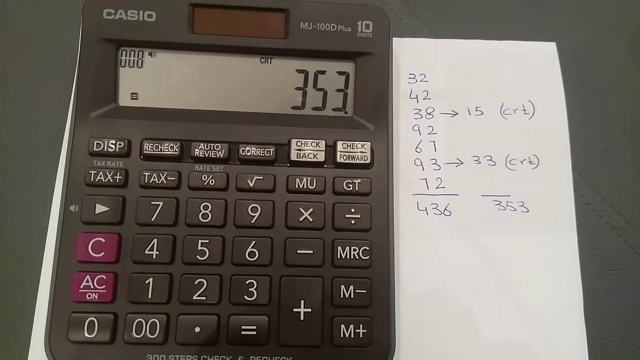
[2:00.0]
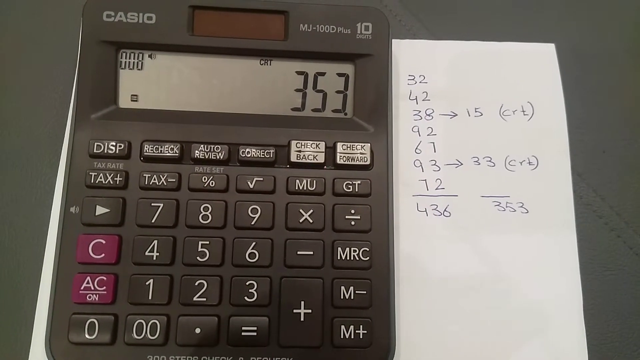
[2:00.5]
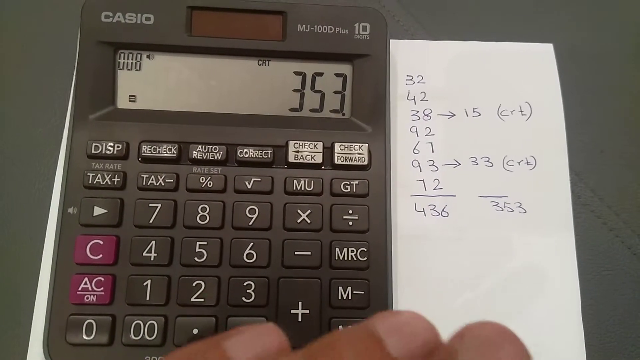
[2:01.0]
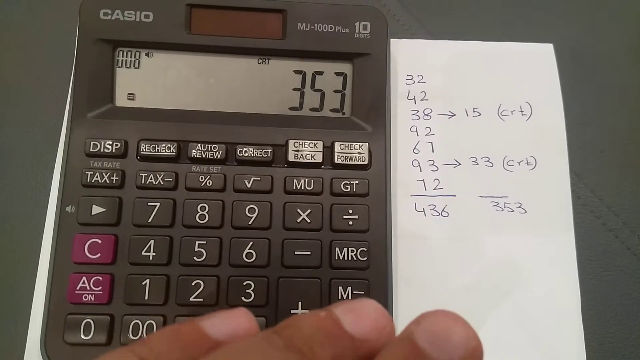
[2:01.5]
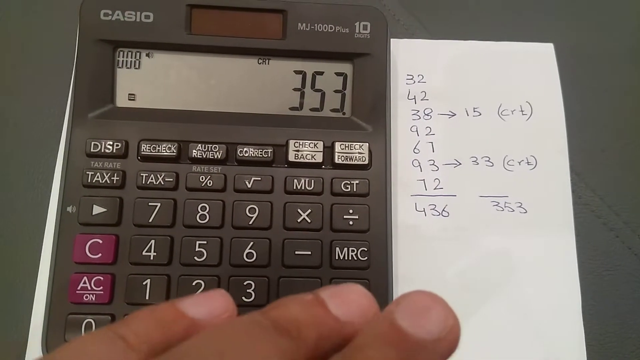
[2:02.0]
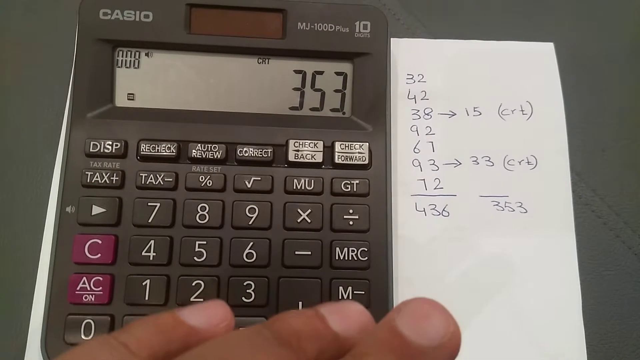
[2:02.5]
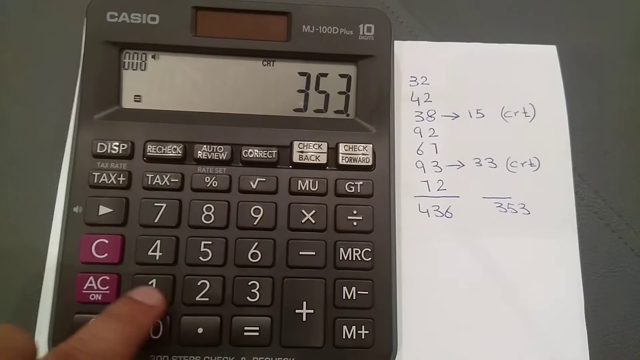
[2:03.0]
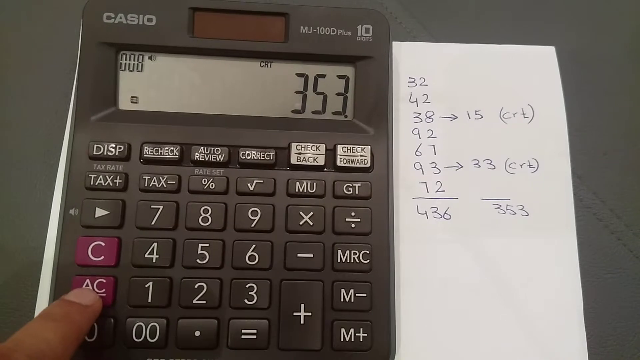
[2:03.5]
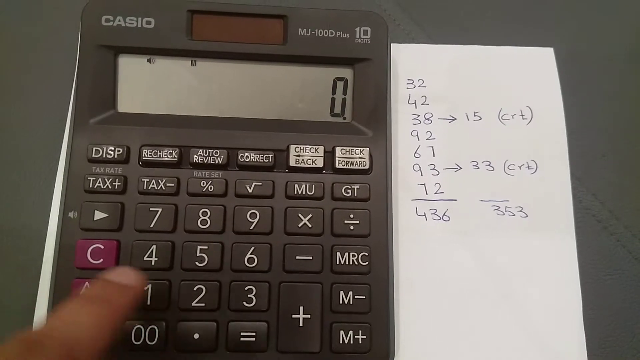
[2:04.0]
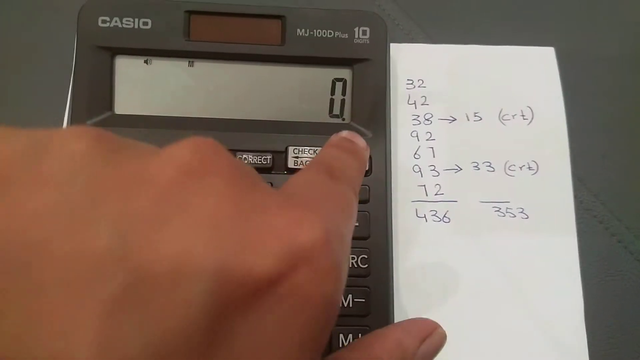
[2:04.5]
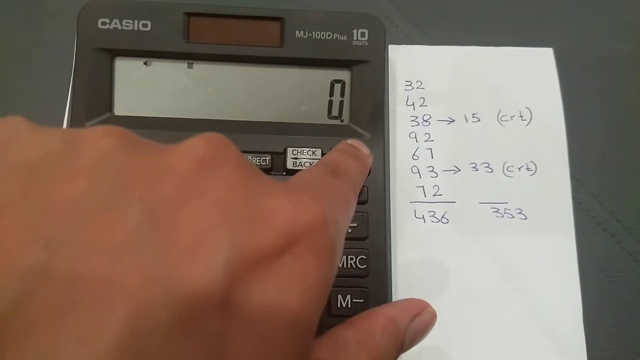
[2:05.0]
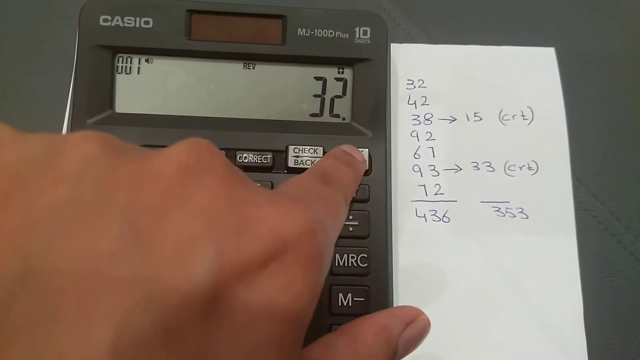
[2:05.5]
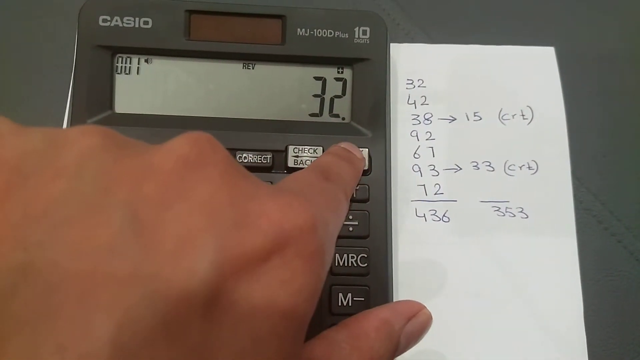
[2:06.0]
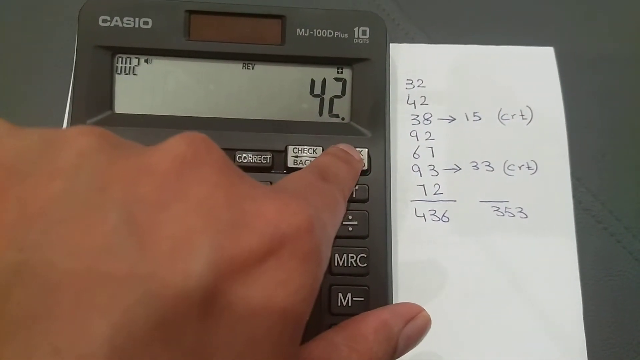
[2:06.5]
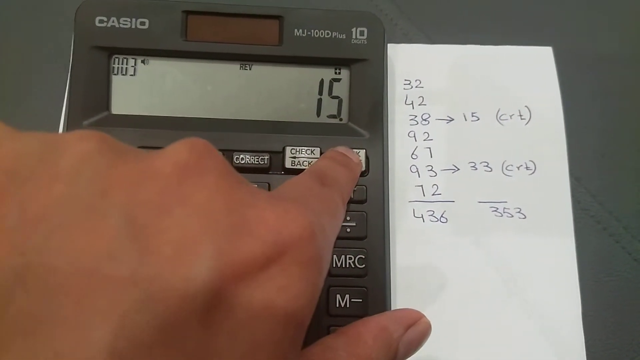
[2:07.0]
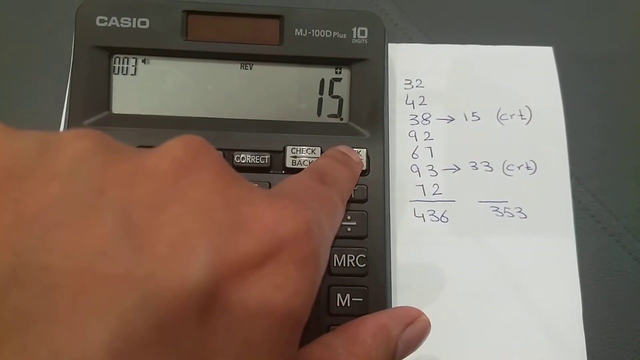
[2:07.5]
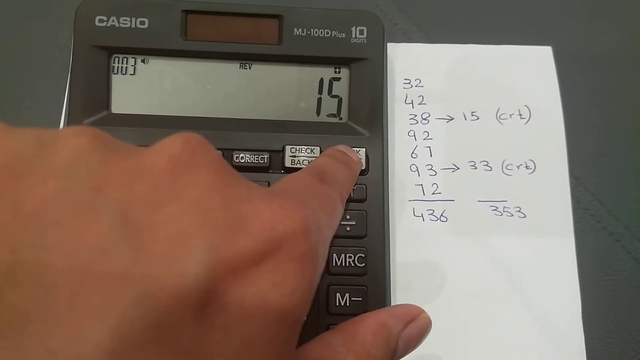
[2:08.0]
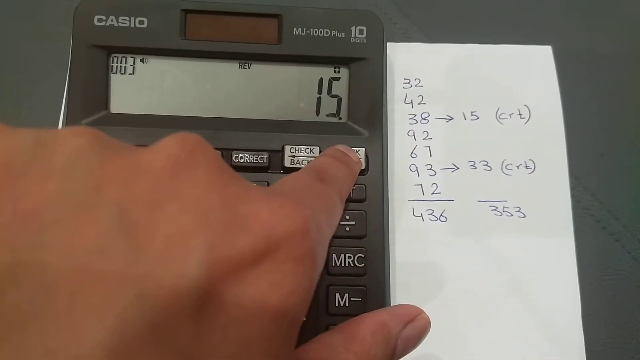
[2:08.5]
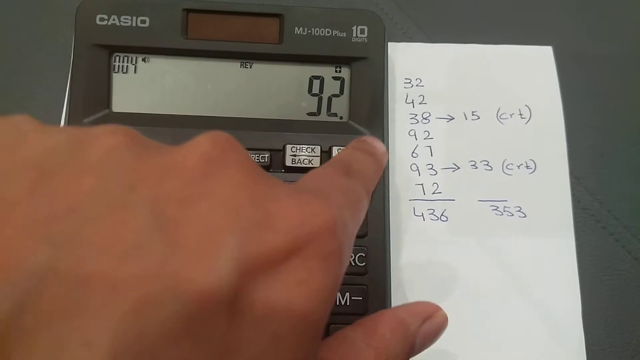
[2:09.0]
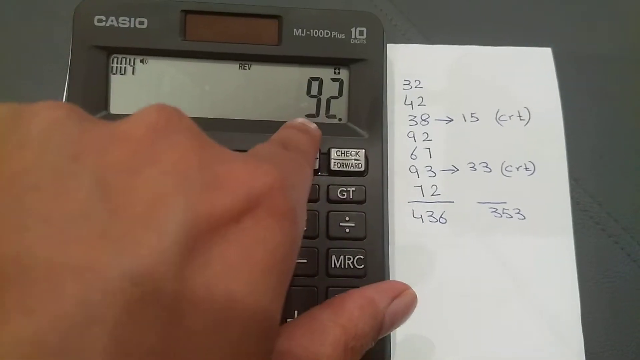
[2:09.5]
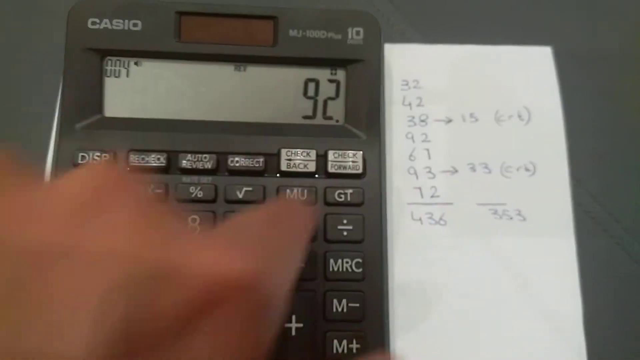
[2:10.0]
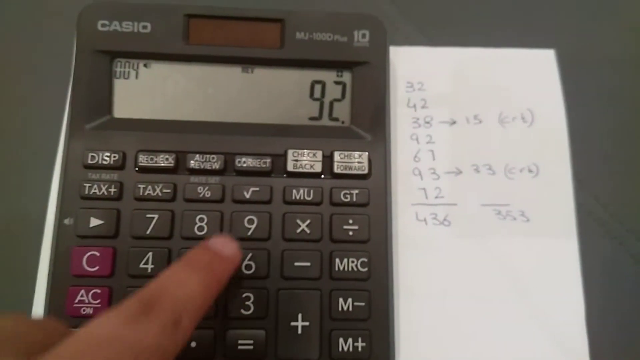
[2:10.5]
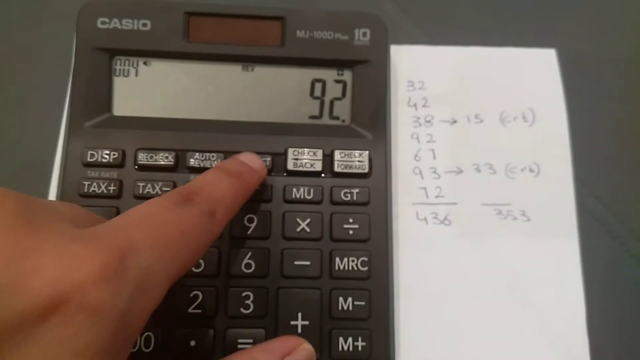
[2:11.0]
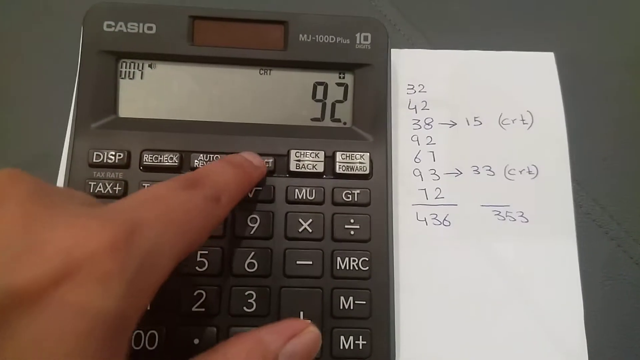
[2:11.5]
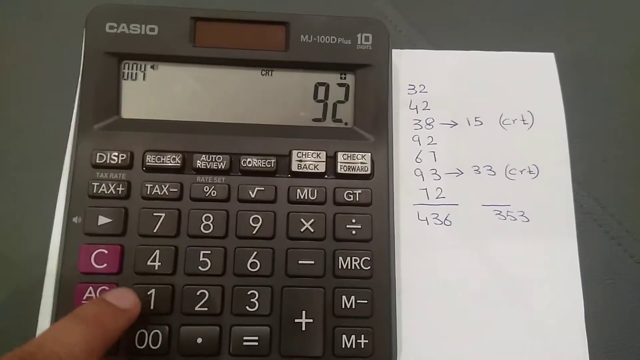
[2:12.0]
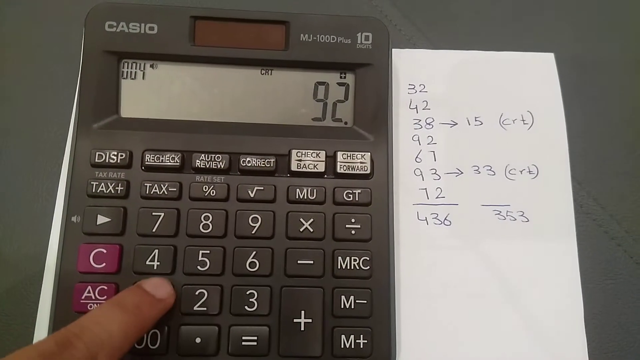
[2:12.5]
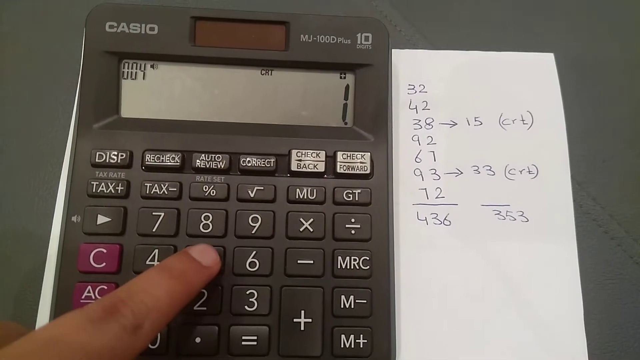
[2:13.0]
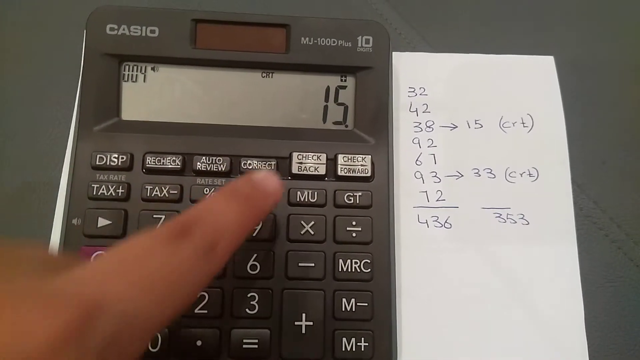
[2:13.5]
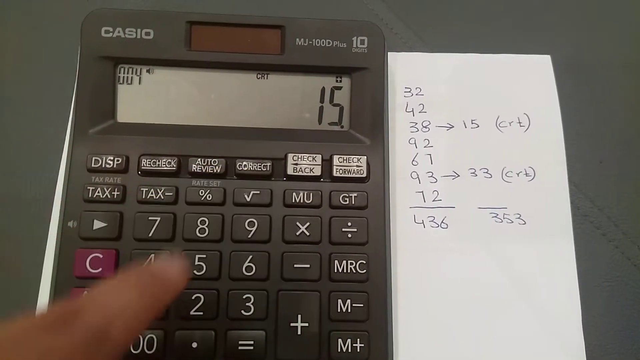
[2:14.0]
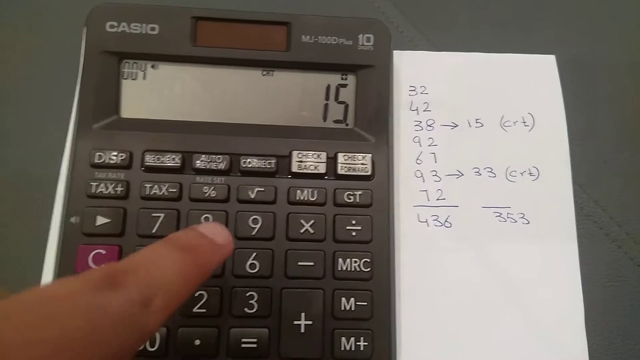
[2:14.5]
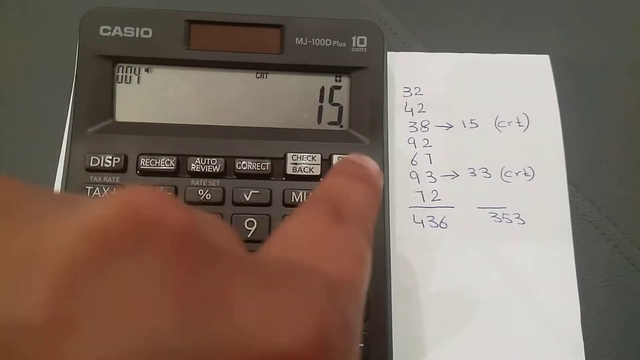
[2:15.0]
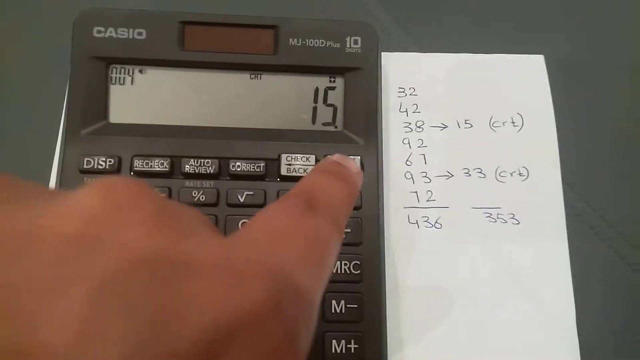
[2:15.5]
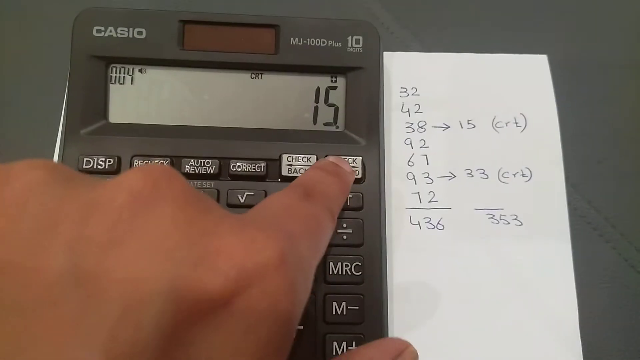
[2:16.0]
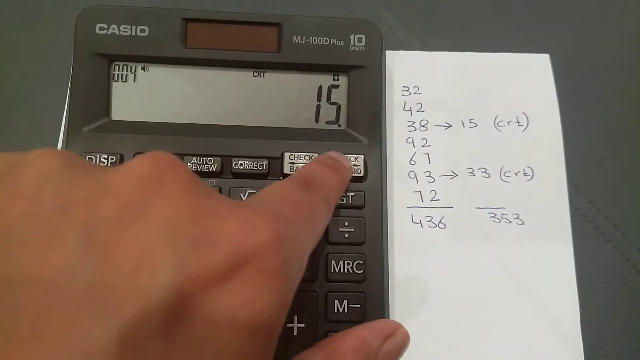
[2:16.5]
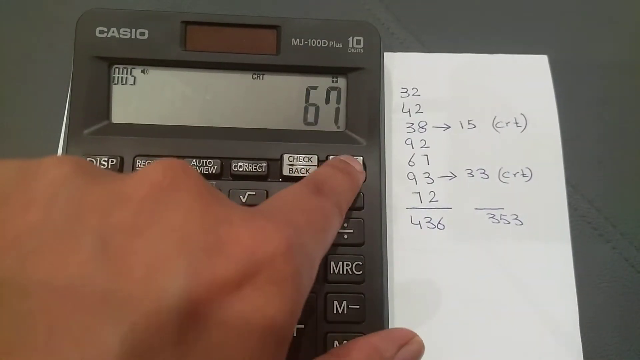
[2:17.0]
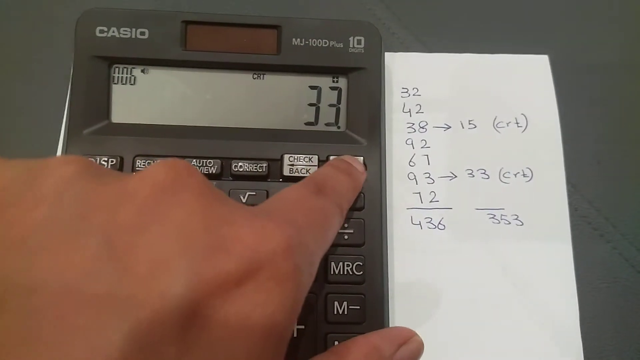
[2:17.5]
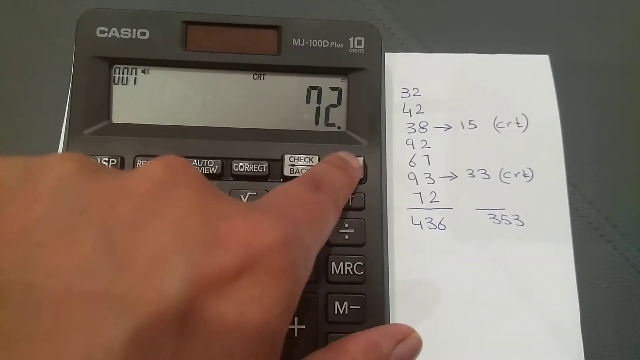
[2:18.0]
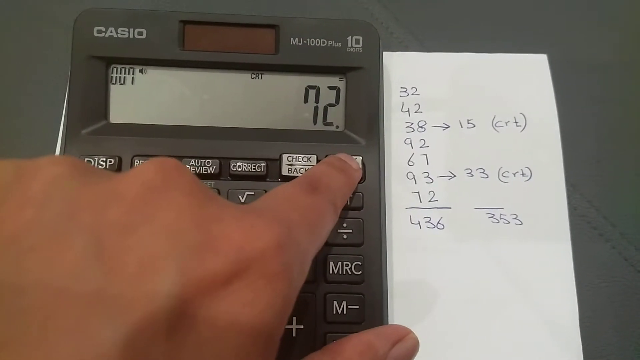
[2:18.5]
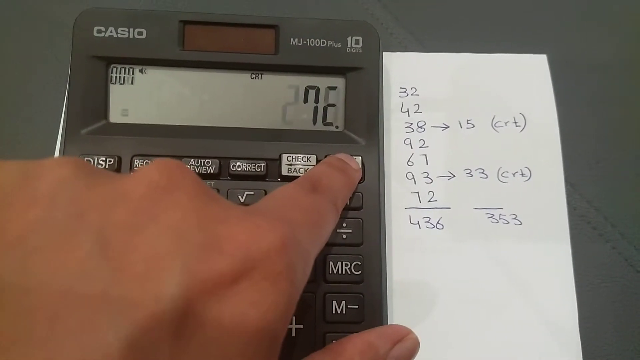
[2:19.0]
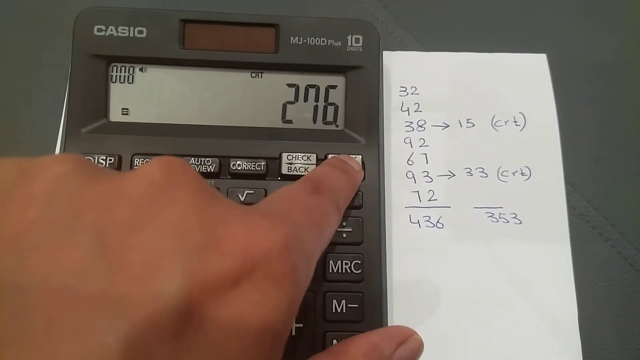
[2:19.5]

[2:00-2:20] The calculator display shows the number 353. With their index finger, the person presses the red button on the left side marked "AC" with "on" on the line underneath, and the display shows zero. They press the check forward button and the display changes to 32. They press check forward again and it changes to 42, and once more and it changes to 15. With 15 showing, they hit check forward again and it shows 92. The correct button is then selected, the number 15 is put in, and check forward is selected again. The number that comes up is 67.